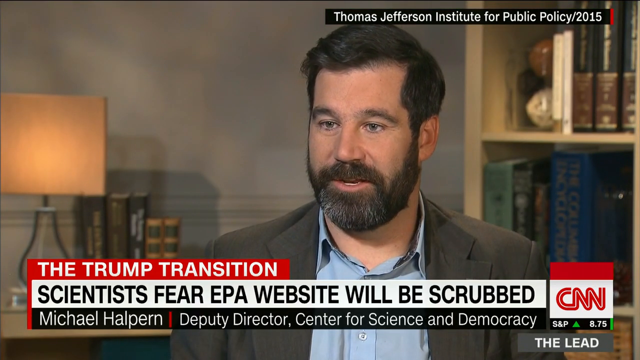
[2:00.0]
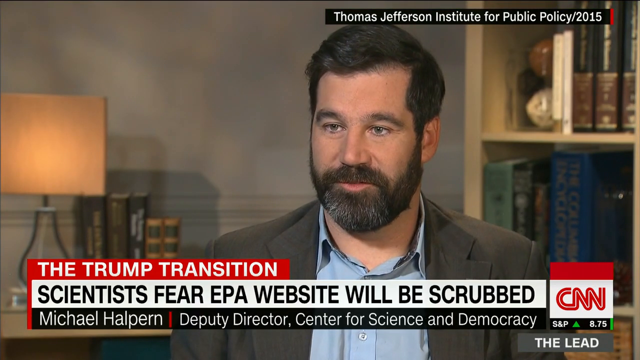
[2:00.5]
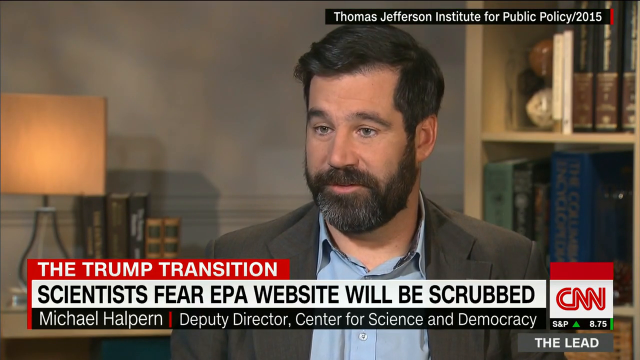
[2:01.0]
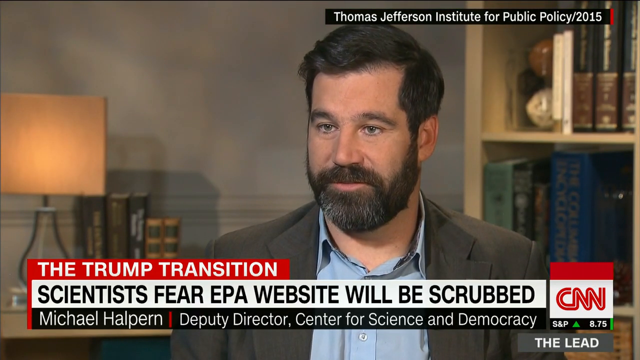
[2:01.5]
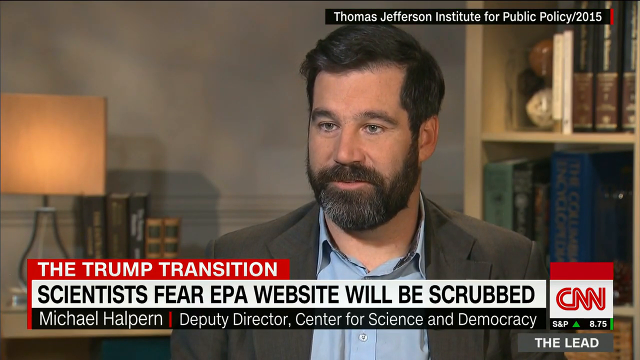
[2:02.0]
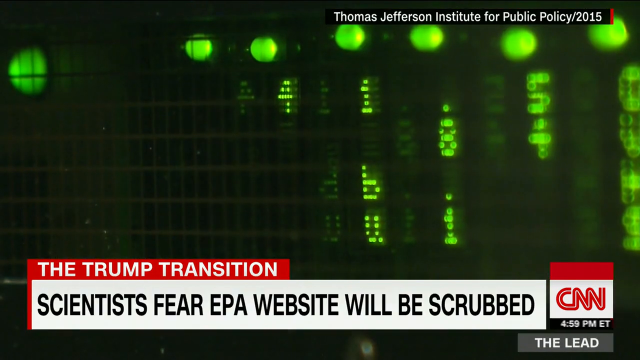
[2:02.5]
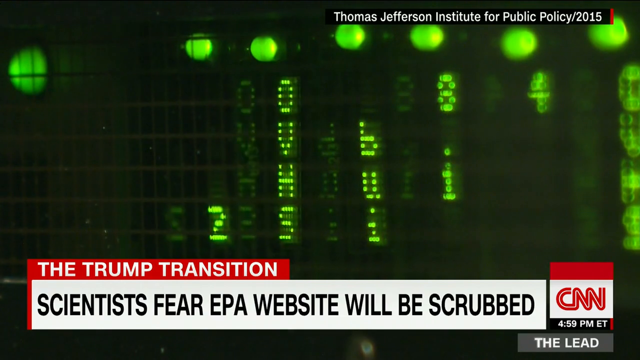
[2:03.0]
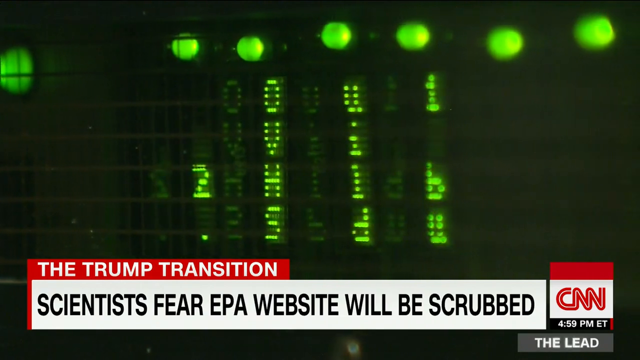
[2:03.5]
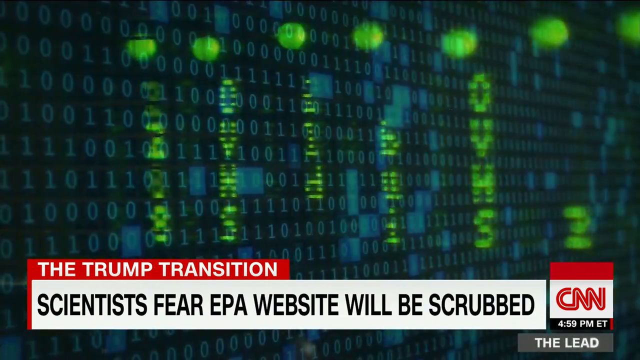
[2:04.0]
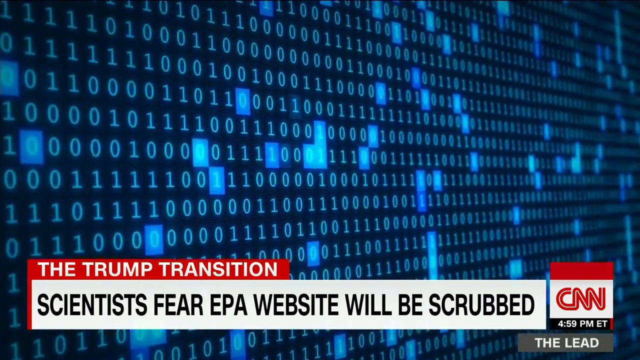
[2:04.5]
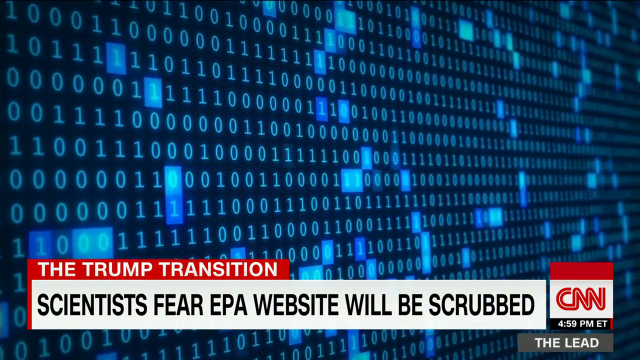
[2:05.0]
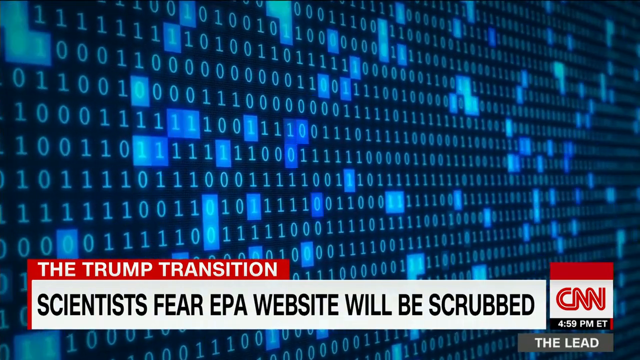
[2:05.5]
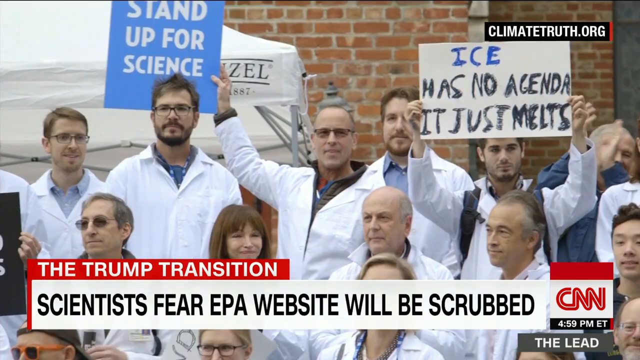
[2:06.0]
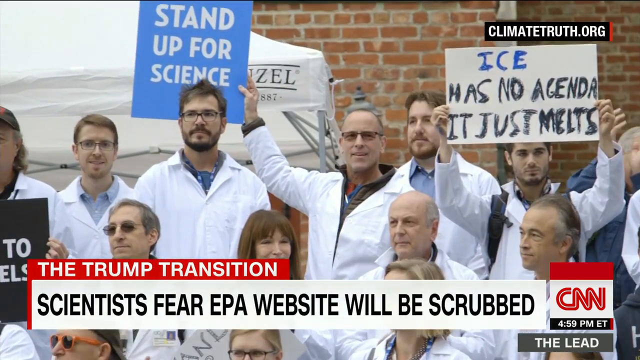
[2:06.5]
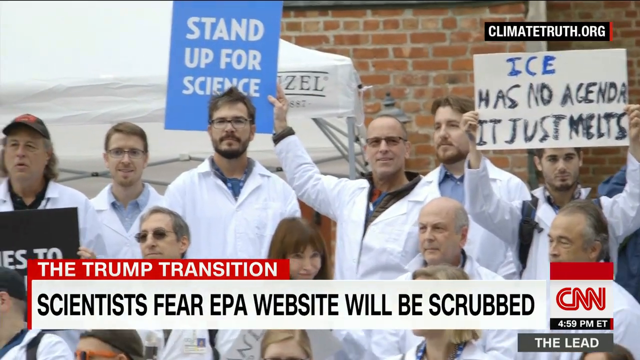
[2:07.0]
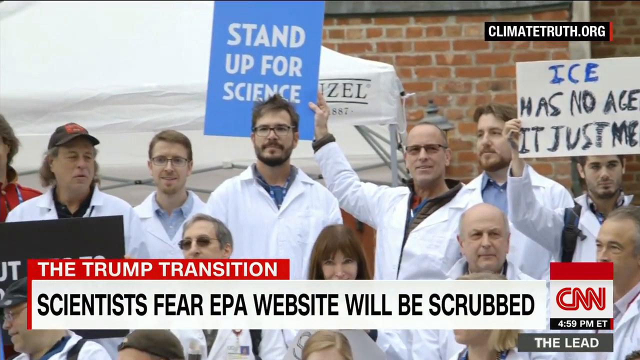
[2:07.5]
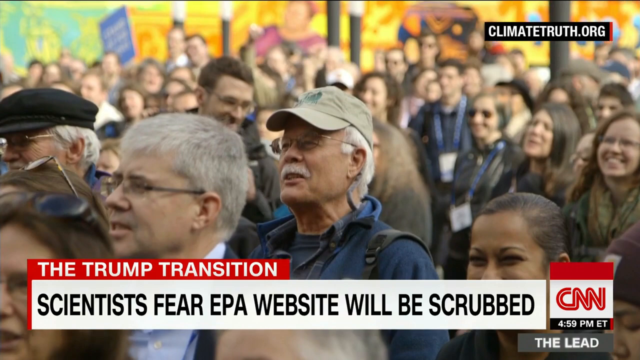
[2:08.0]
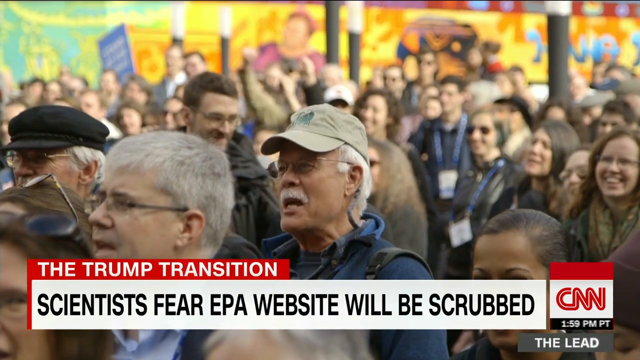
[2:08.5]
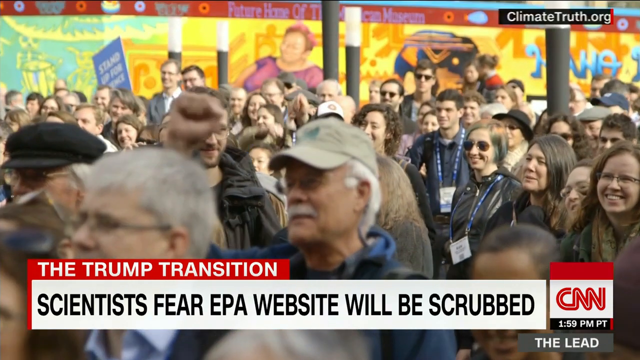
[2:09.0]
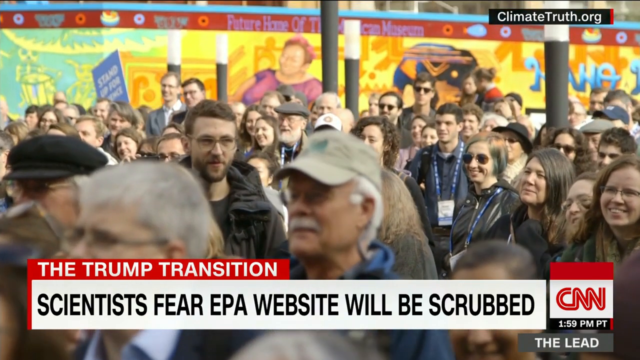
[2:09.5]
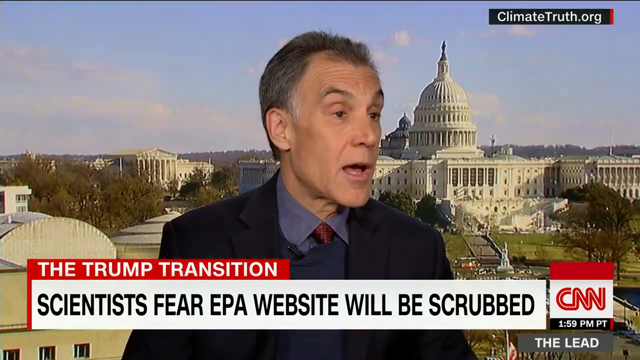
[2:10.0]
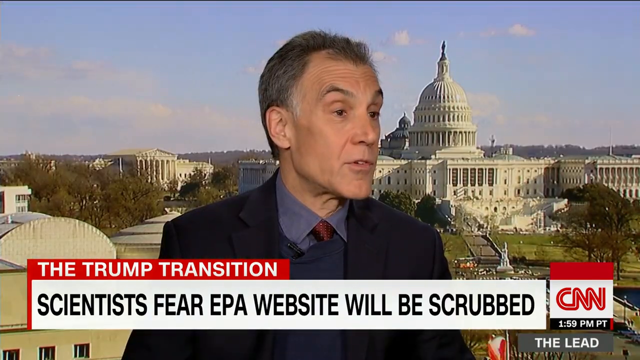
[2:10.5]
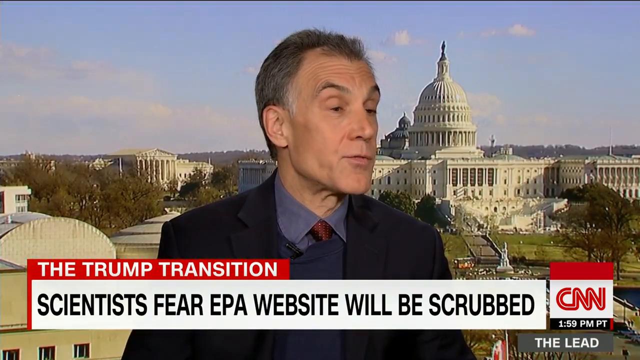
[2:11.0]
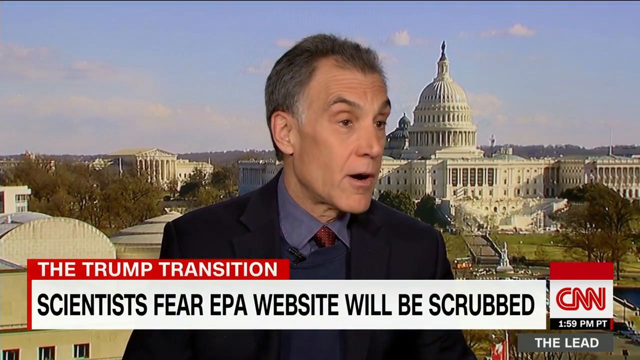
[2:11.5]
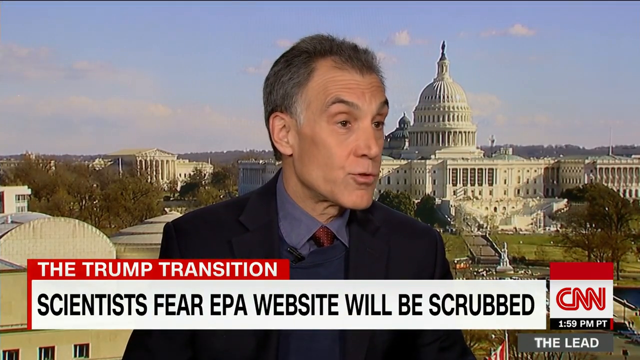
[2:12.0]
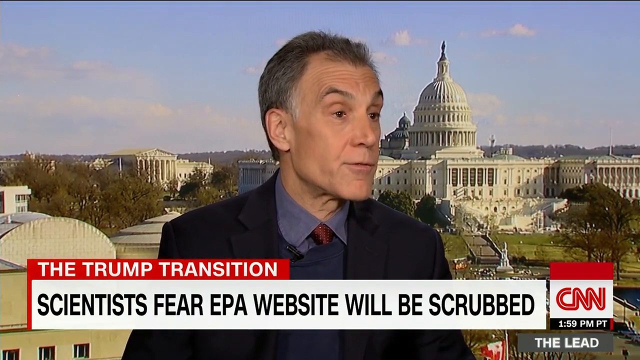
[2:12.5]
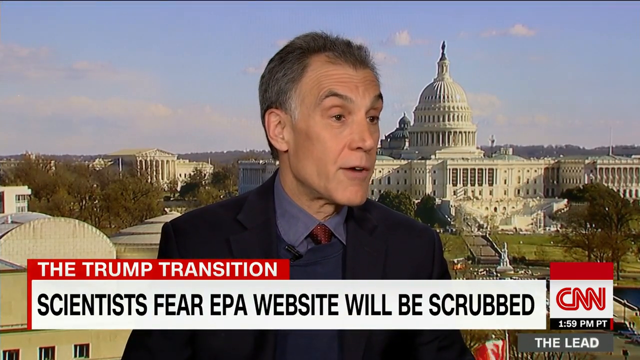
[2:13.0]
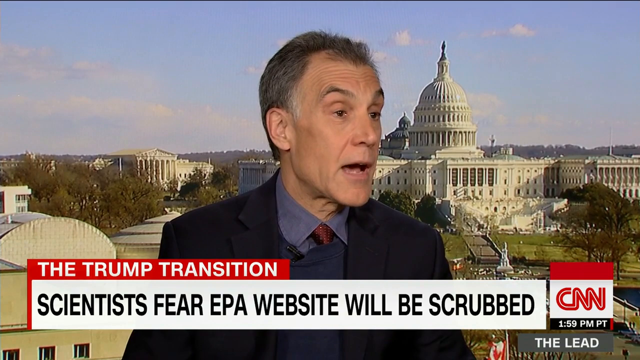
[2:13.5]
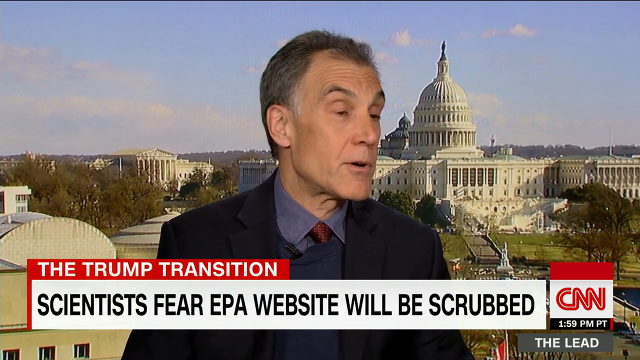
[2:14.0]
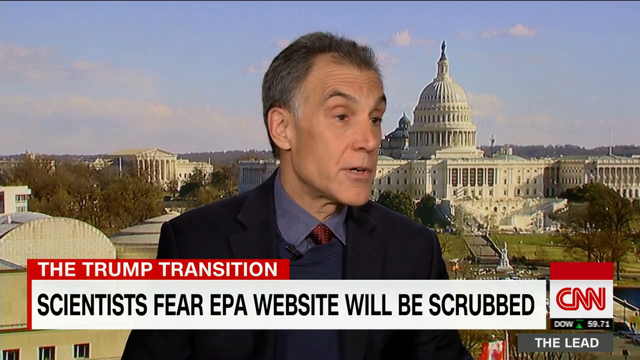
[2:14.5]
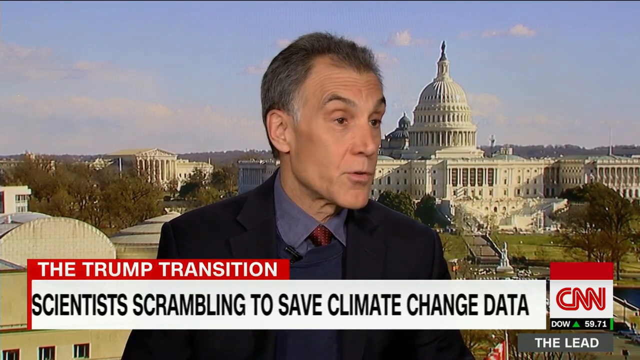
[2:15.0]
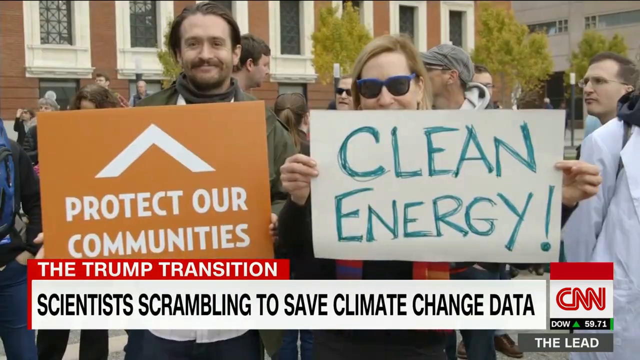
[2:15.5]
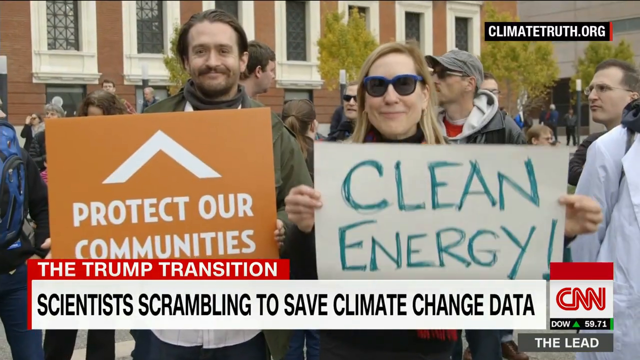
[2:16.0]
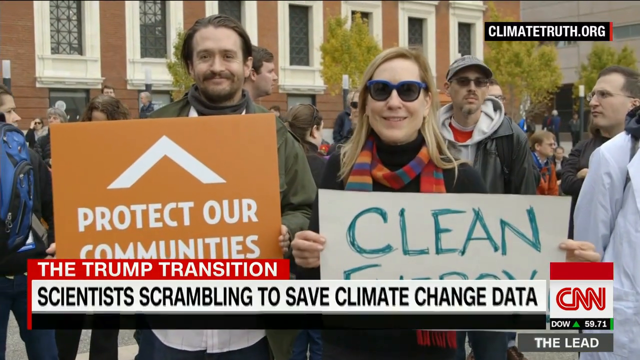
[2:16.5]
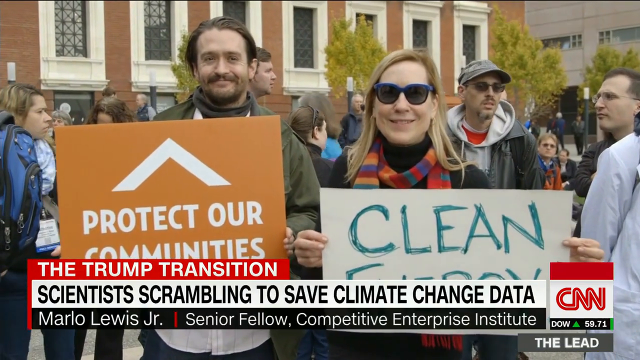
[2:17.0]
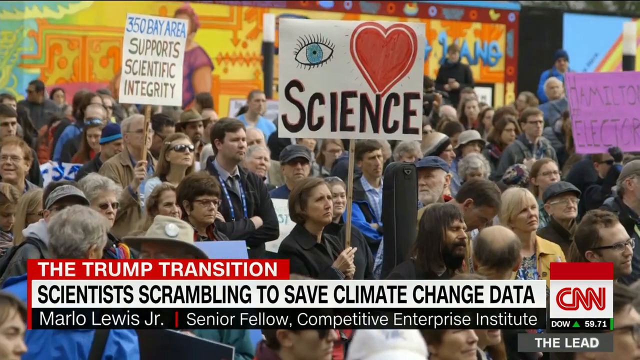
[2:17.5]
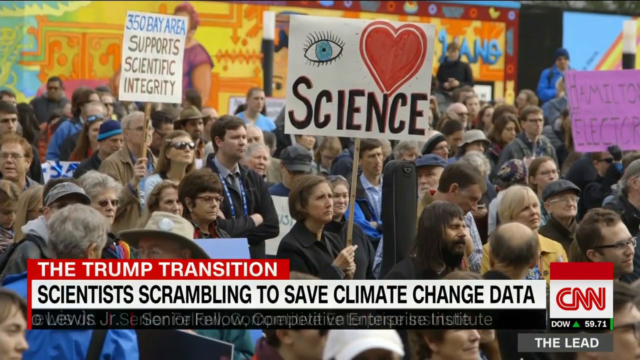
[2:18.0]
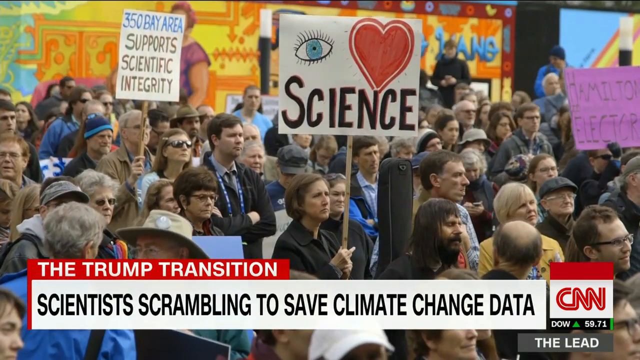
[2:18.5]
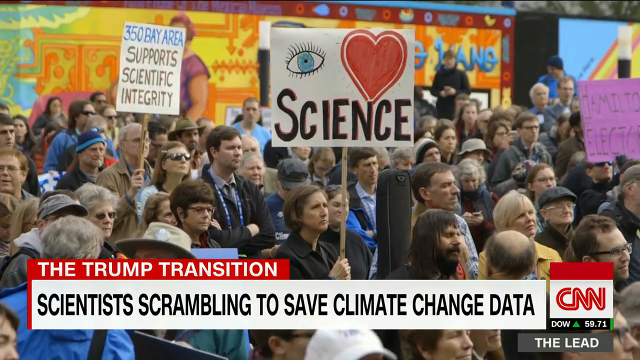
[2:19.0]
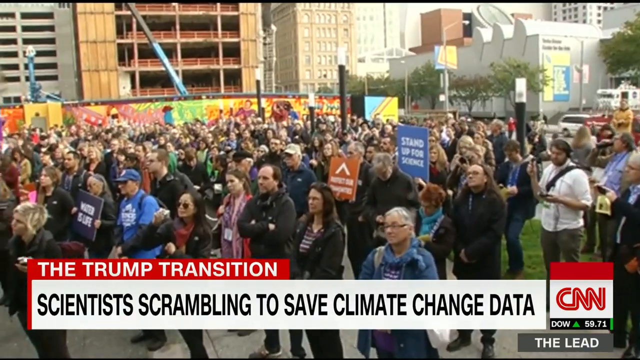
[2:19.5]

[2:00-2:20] A digital display shows green lights at the top and down columns of different numbers and letters that light up. Another, massive black screen shows ones and zeros, and random squares light up over them. A series of clips goes back and forth between the speaker and the climate change demonstration with the scientists. People at the protest hold up signs reading "protect our communities, clean energy," "I love science" with an eye image and a heart, and "350 Bay Area supports scientific integrity." They are all wearing jackets, so it looks a little cold outside. There is a good-sized crowd, and in the back there appears to be new construction, with some scaffolding and a temporary border. Another clip shows the scientists in white jackets holding up signs reading "stand up for science" and "Ice has no agenda. It just melts."